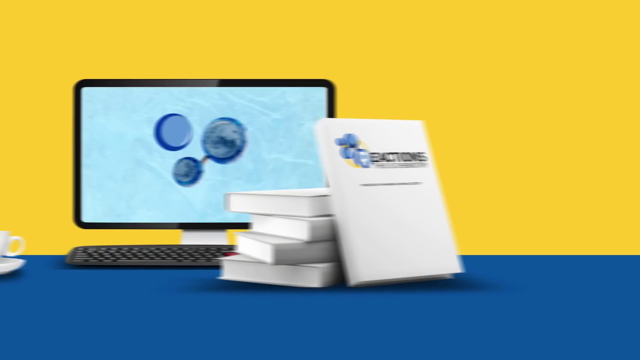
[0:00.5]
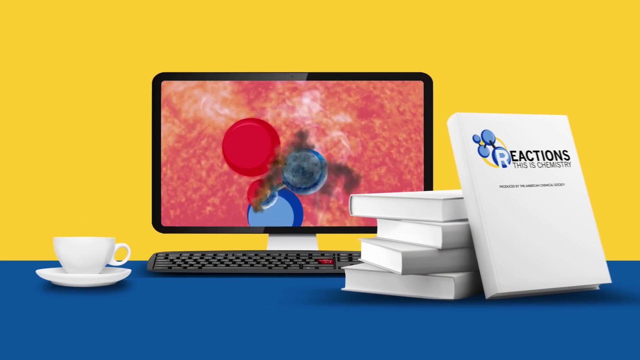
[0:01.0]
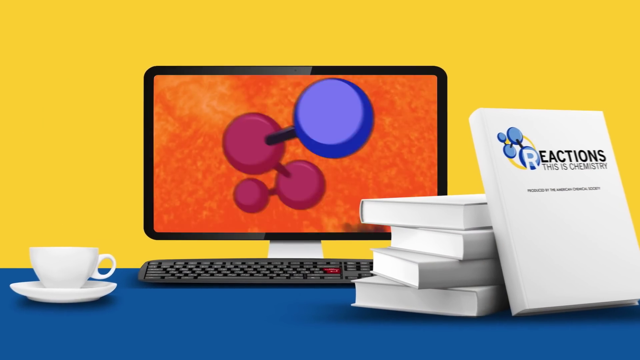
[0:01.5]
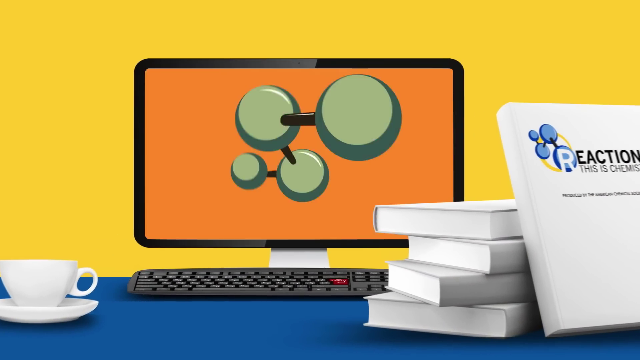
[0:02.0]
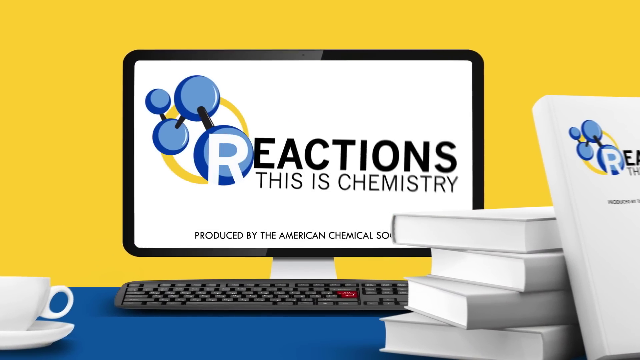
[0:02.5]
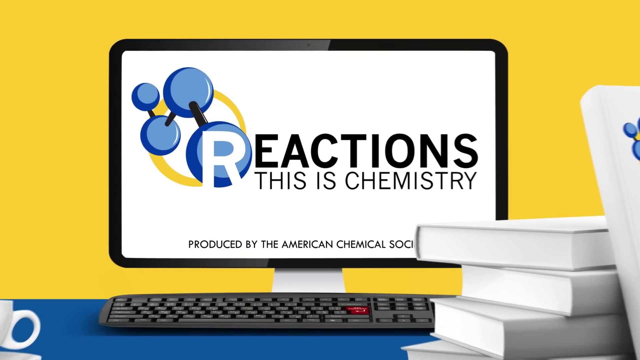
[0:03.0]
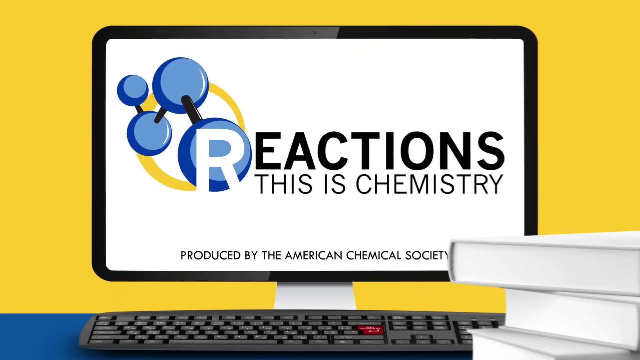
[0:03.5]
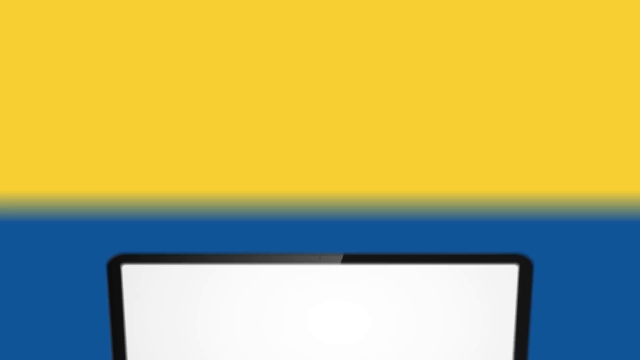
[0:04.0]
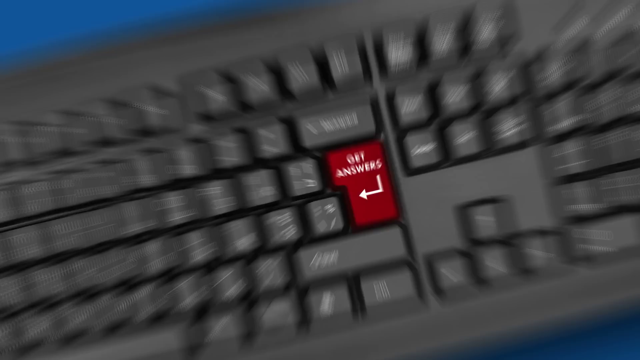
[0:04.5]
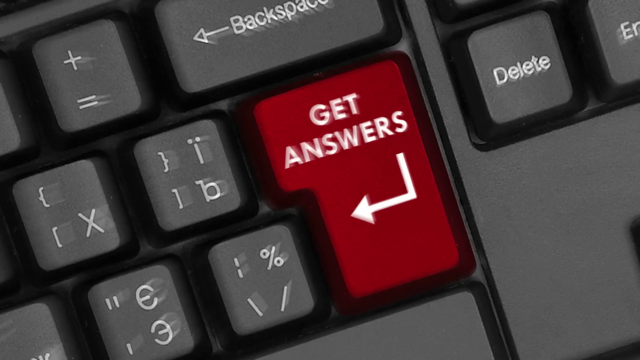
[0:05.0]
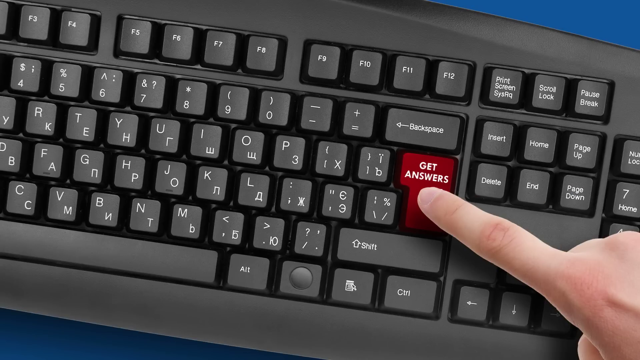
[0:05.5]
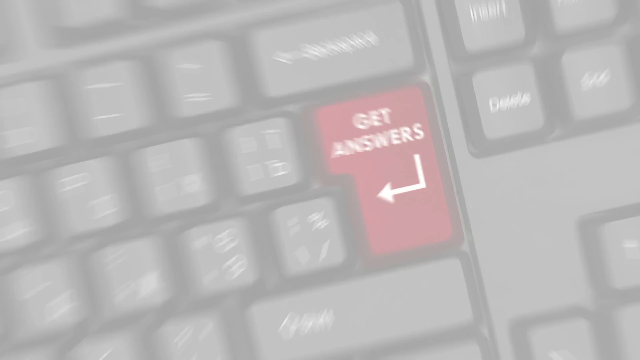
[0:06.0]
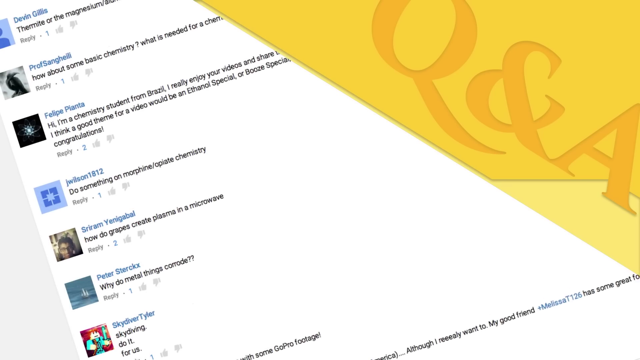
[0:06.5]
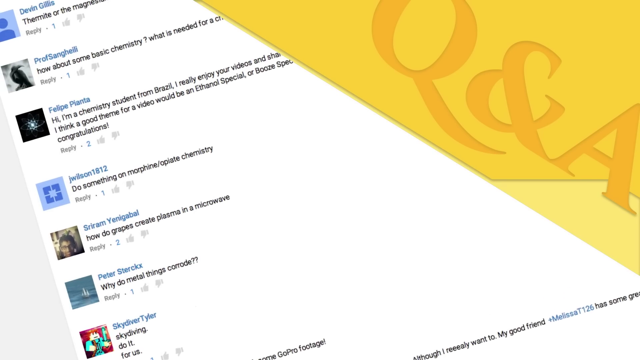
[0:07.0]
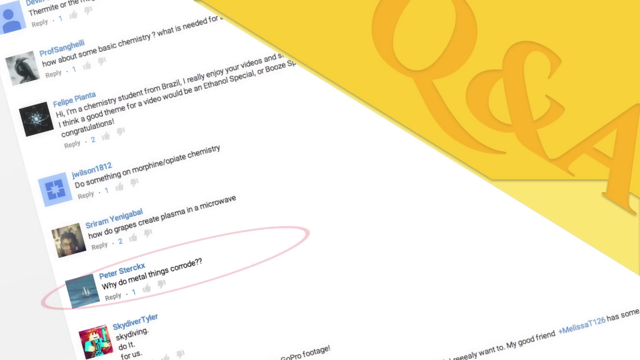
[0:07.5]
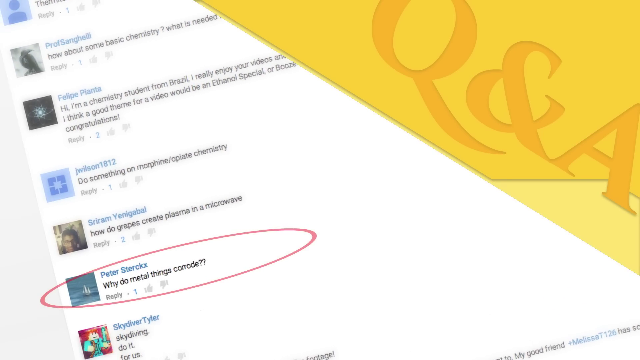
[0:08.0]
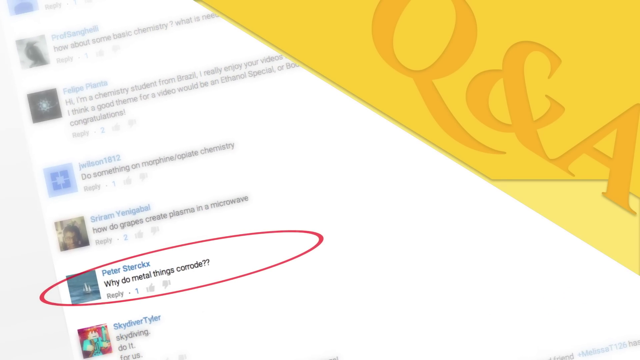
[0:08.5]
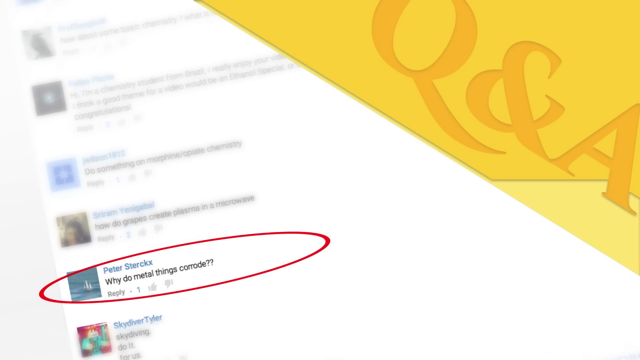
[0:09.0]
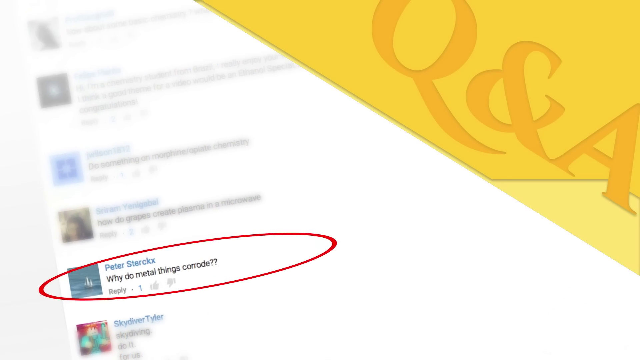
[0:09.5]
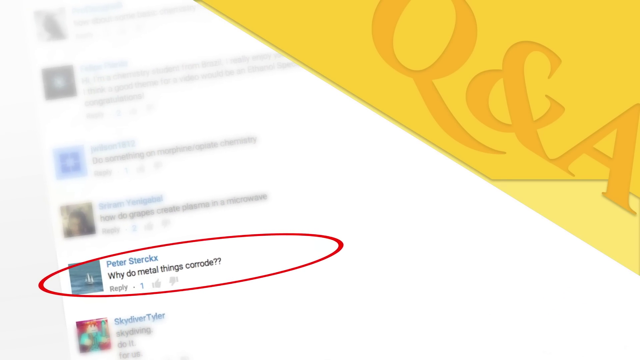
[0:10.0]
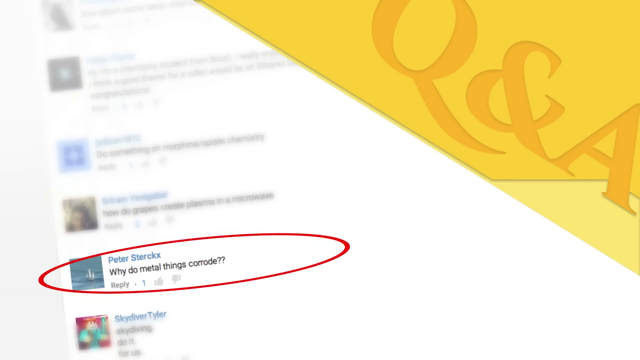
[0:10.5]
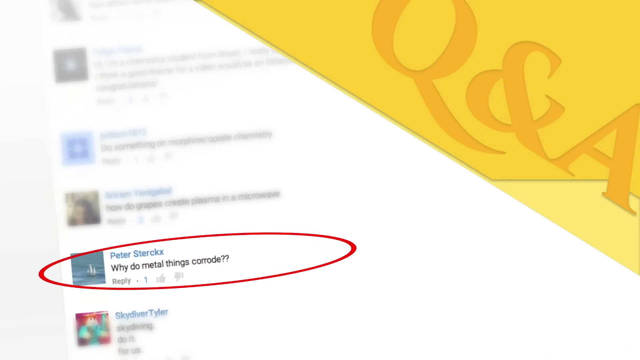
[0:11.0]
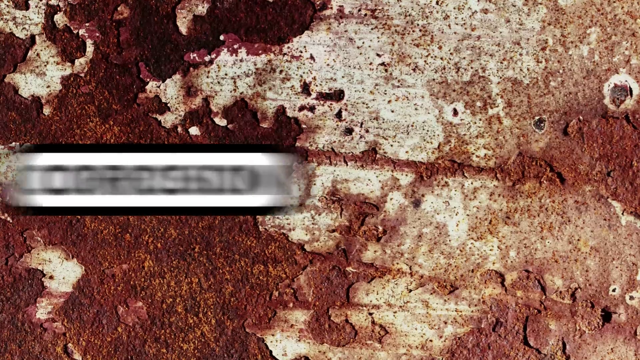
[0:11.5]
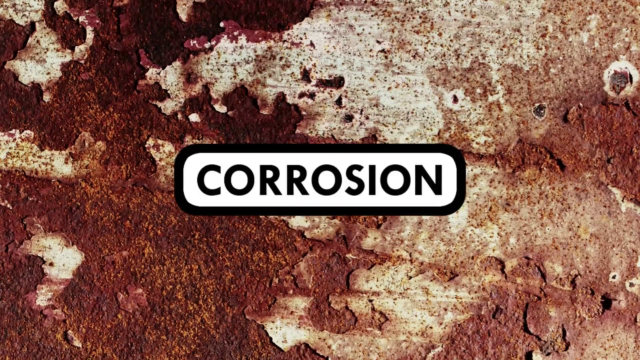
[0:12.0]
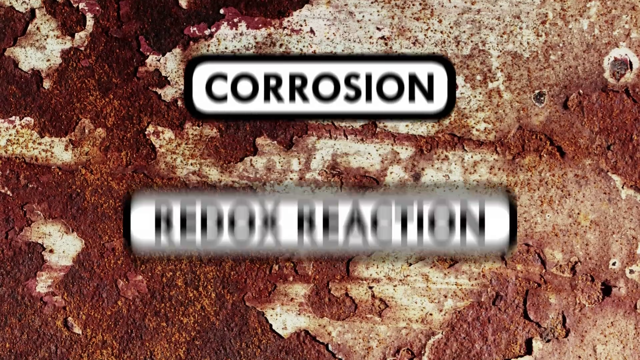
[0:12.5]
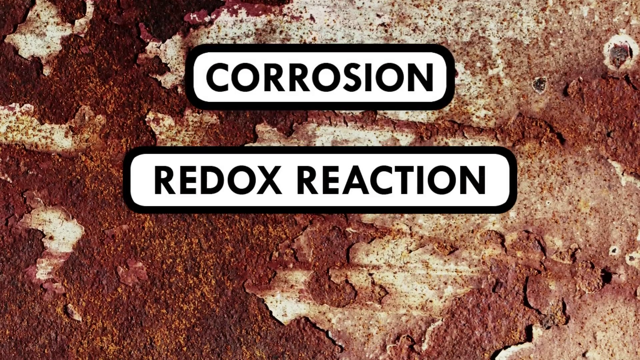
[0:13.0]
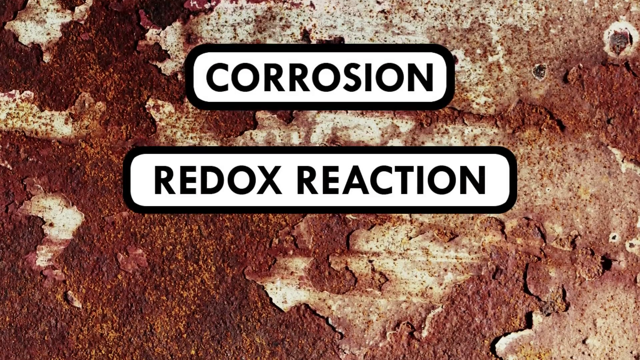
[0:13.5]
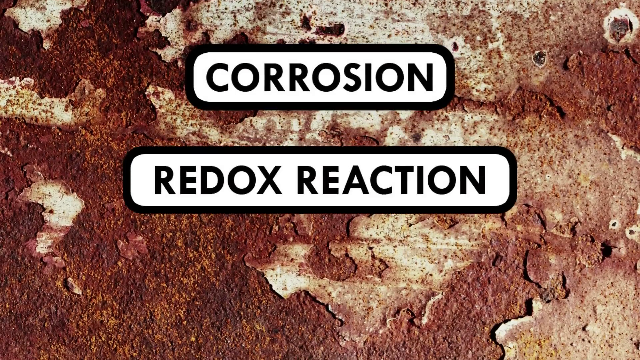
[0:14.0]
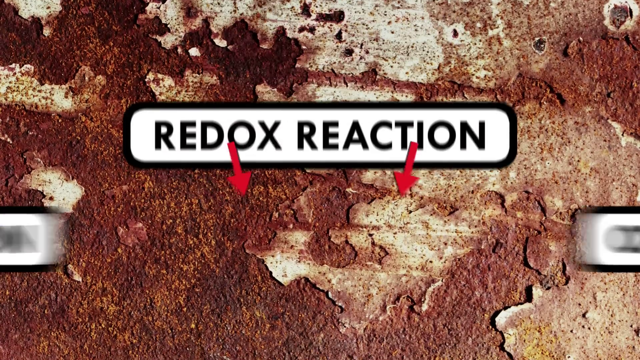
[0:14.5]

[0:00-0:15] The video asks "Why does metal rust?" A picture of a rusty screw appears, along with a computer, a screen and a keyboard. Pictures and words about corrosion appear, including "reaction" and "reduction", and a computer monitor is shown. On-screen text reads "why do metal things corrode" along with "corrosion" and "redox". There is a picture of rust, a rusted piece of metal, and books that say "reactions". A red key on the keyboard, like the enter key, says "get answers" with an arrow. The word "corrosion" appears in black in a white box surrounded by a black ribbon, with arrows pointing down to "reduction". There is a chemical symbol, "reactions" and "get answers" on a keyboard, and the text "how do hand sanitizers work" also appears. "Oxidation" and "reactions" appear on a computer monitor, along with "get answers", "why do metal things corrode" with question marks, and a circle. A coffee cup is on a blue table next to the computer, and a circle is around a person. The words "why do metals rust", "corrosion", "redox reaction", "reduction" and "oxidation" appear.